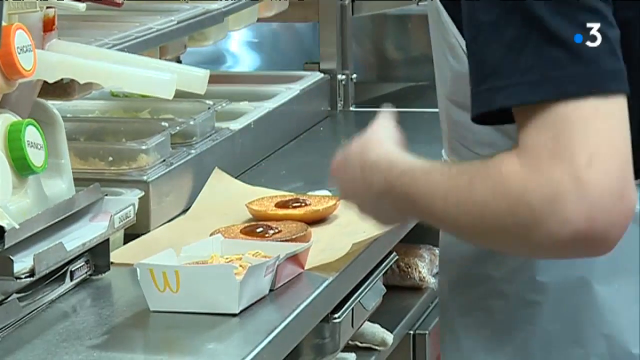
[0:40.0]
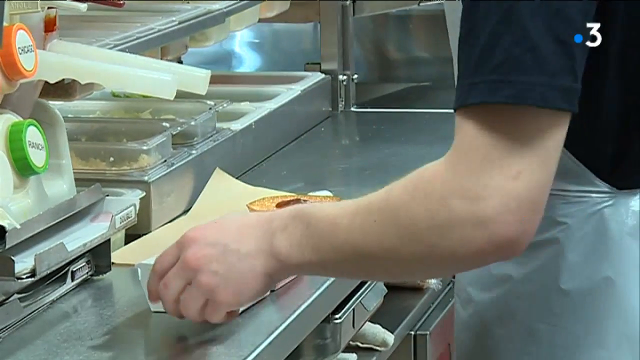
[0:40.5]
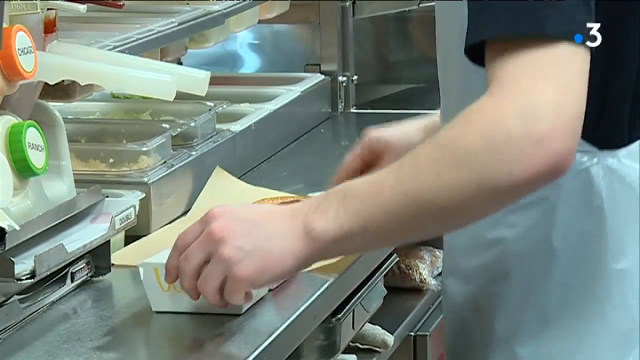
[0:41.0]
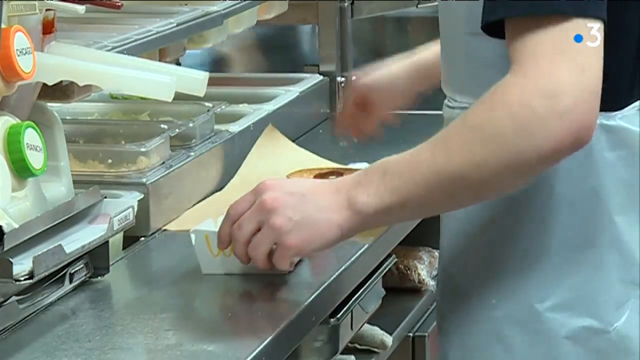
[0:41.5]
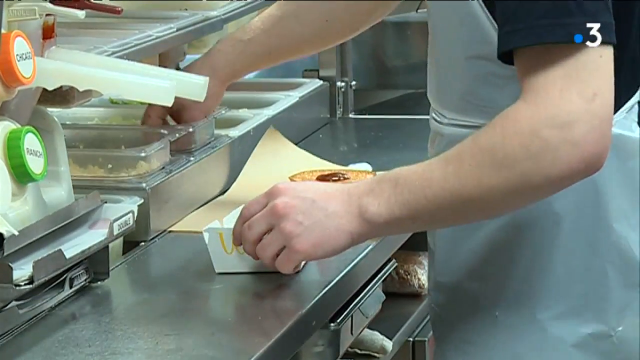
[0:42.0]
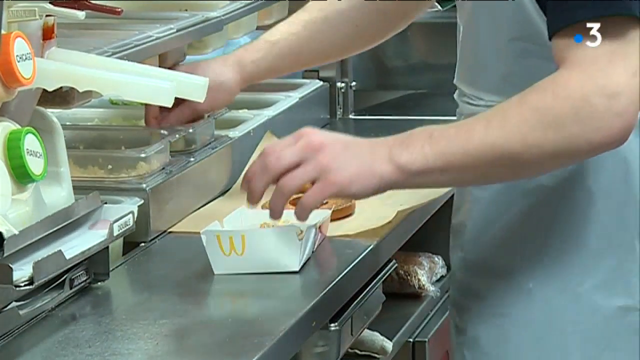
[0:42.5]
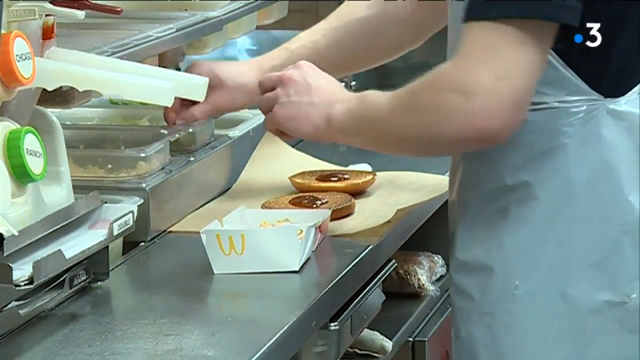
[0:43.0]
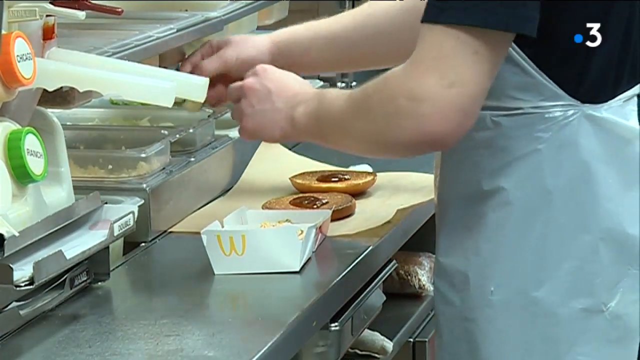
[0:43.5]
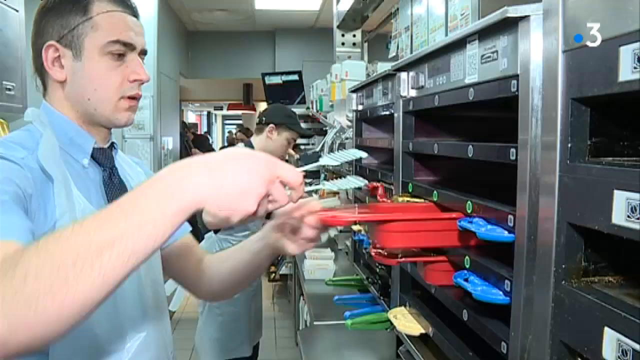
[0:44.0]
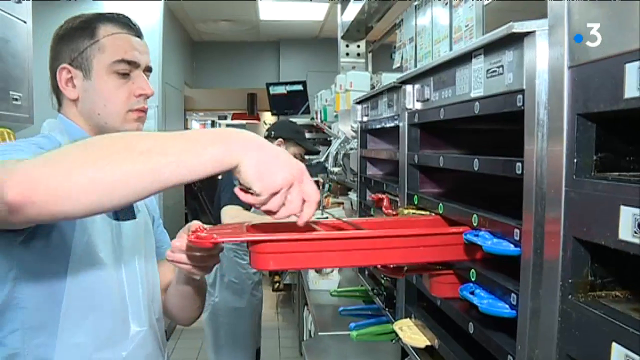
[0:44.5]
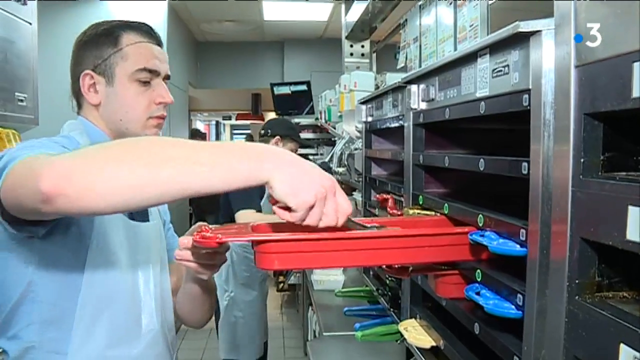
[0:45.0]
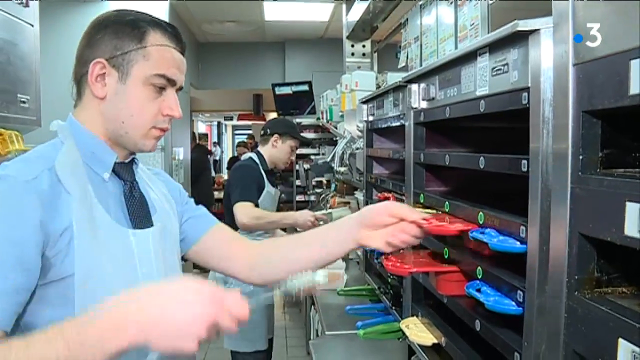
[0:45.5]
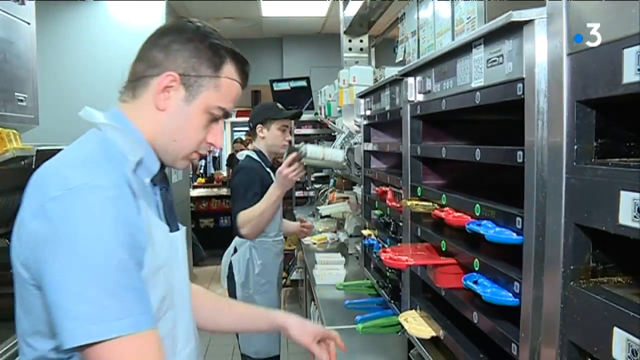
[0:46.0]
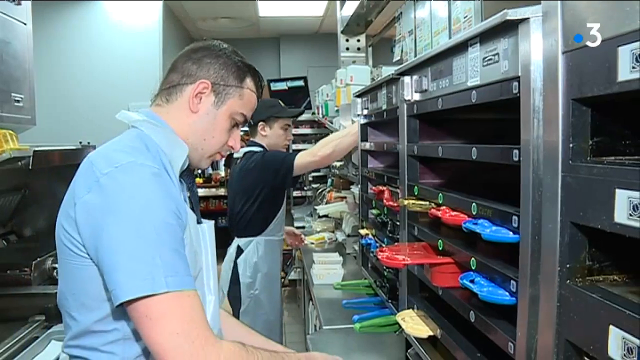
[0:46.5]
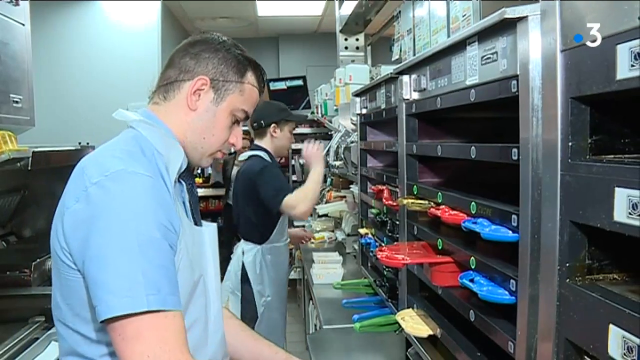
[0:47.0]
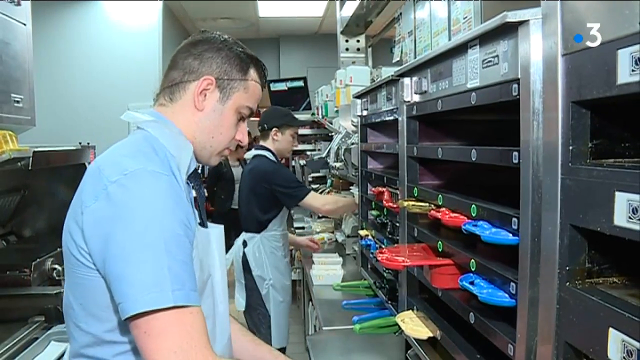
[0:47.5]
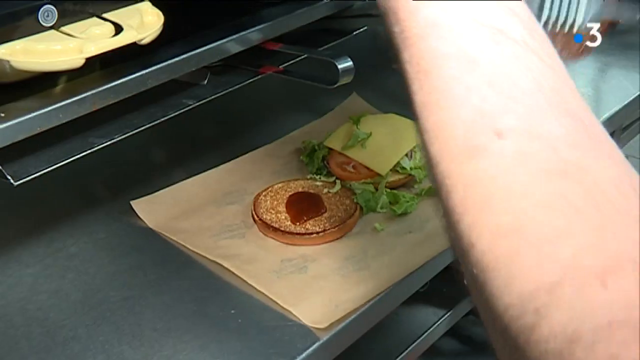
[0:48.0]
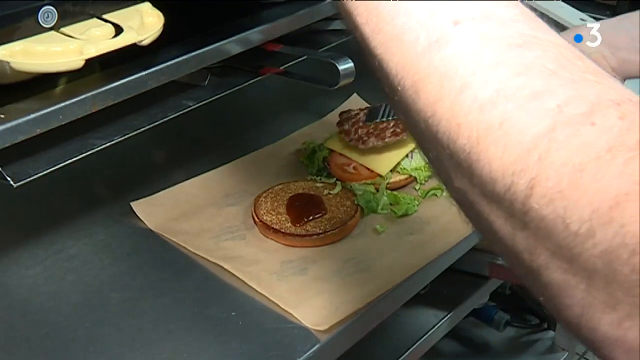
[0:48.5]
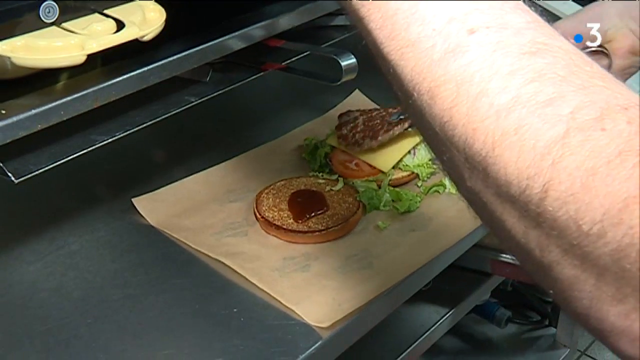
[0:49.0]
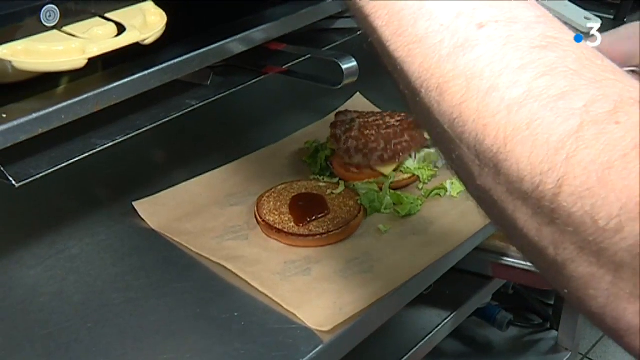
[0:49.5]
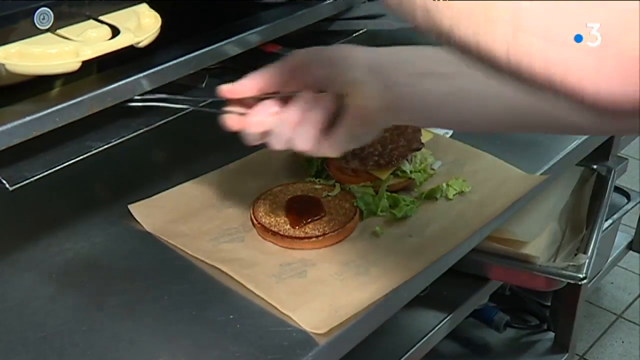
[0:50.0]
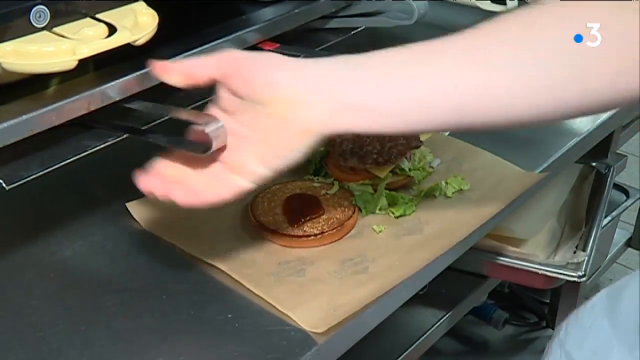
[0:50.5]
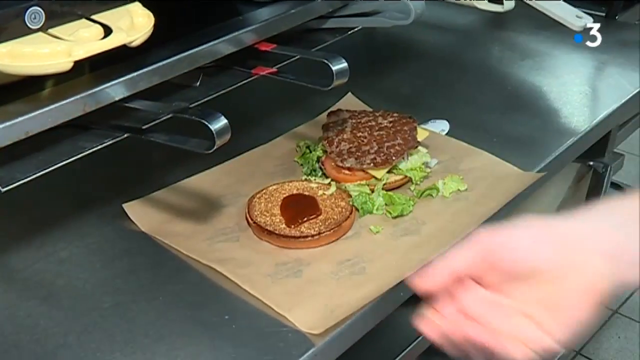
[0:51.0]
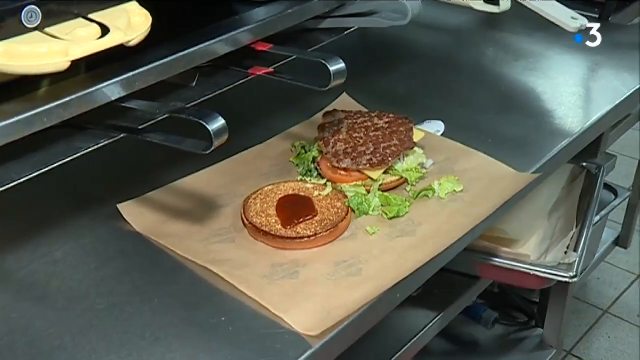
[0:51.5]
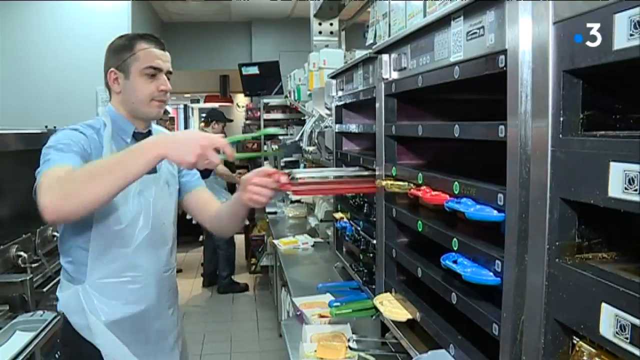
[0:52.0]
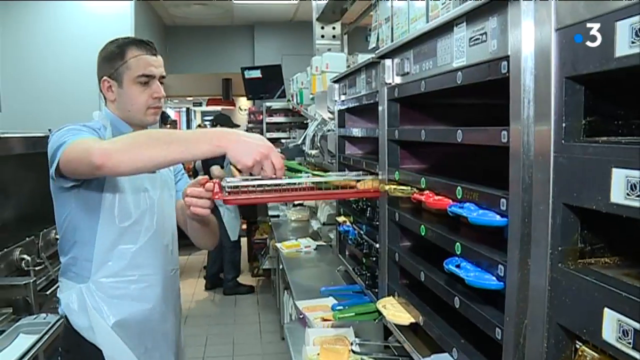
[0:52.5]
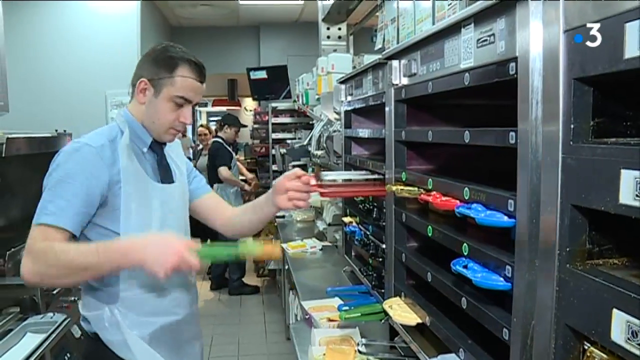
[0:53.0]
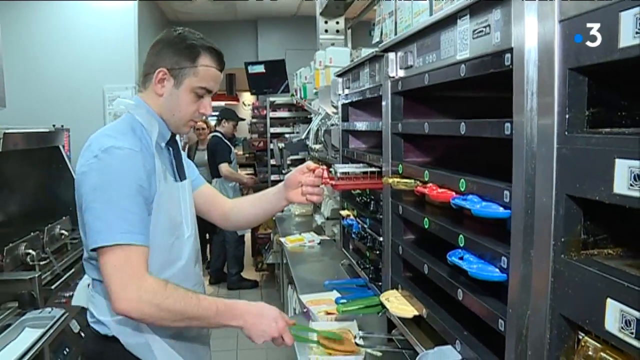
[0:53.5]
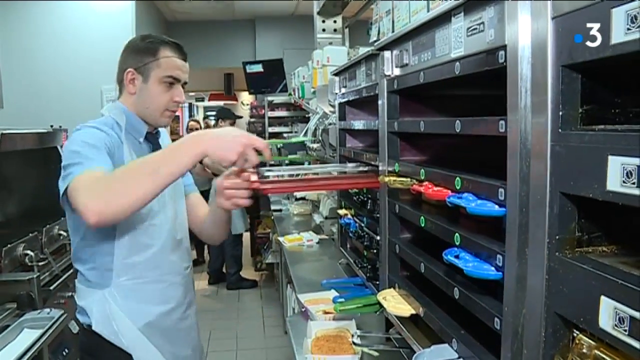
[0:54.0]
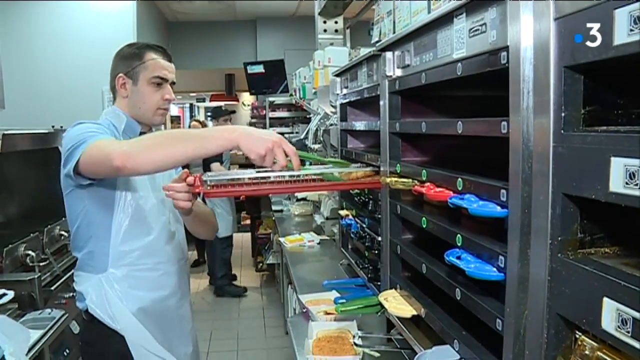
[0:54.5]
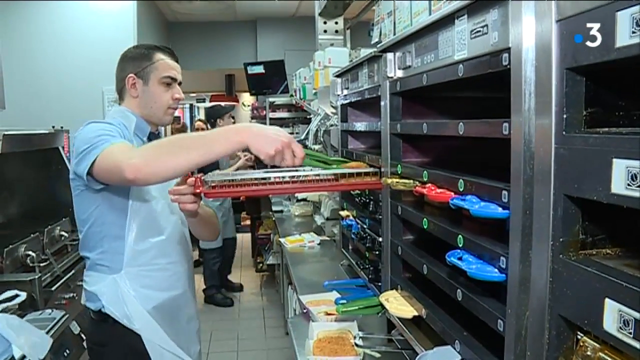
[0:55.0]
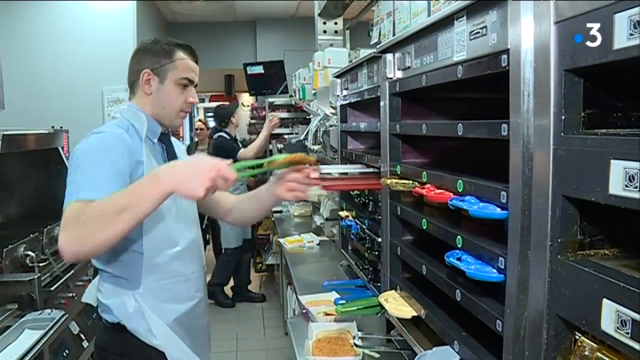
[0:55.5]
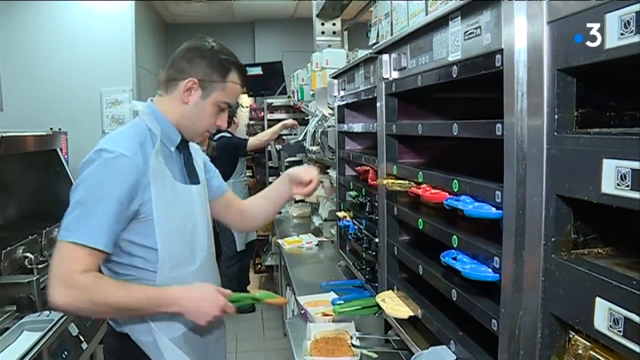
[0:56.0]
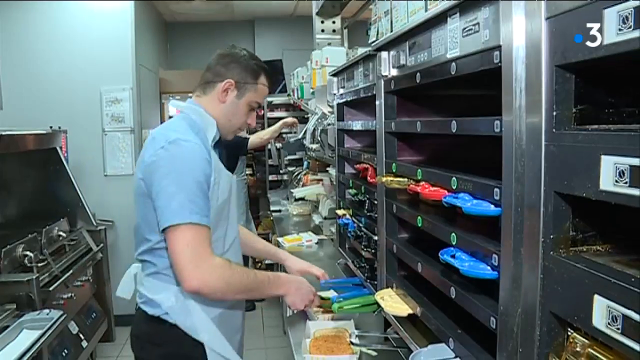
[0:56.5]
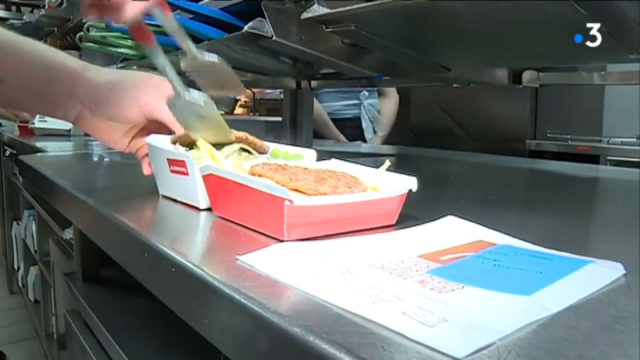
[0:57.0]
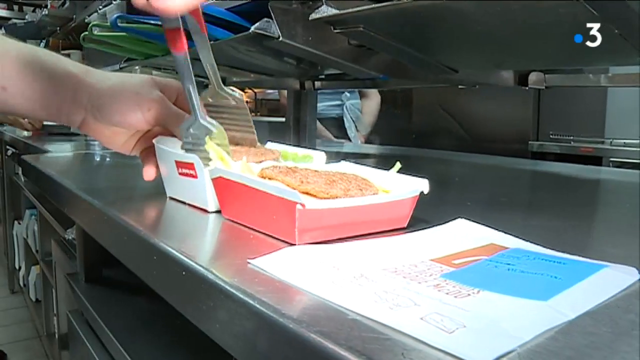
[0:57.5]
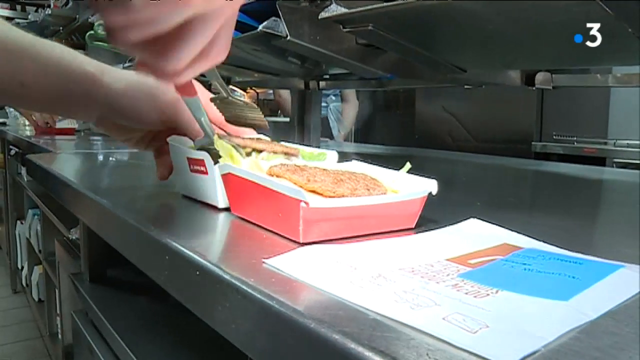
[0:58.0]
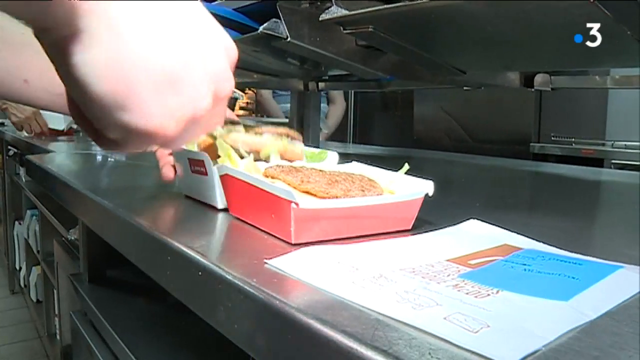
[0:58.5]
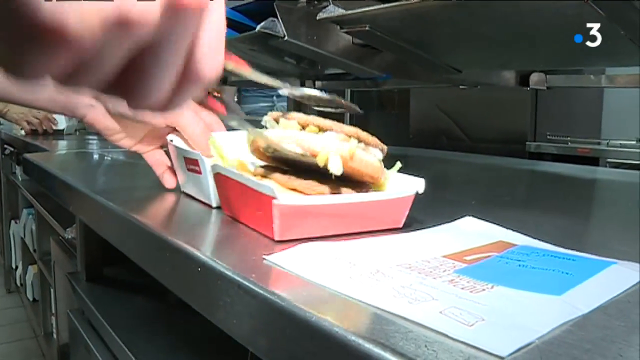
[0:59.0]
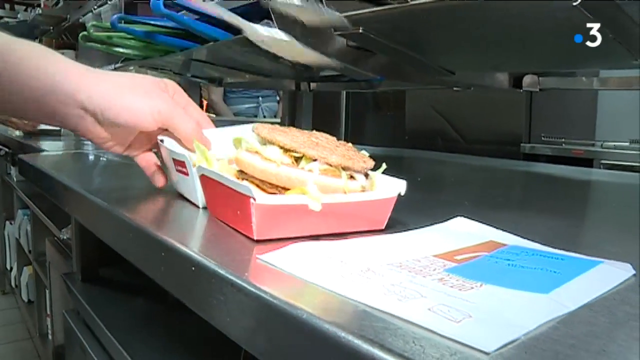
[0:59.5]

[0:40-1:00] Someone prepares a McDonald's burger with an open McDonald's carton in front of them on a metal kitchen countertop. A bun is on a piece of paper, and they reach into cartons for other items to put on it. The shot switches to another person reaching into a slide-out tray and grabbing some material, presumably to make food; he is a man in a short-sleeved blue shirt and a hairnet. Back at the counter, a close-up shows someone placing a patty on top of a slice of cheese, which rests on a stack of lettuce and tomato slices, while the other bun has a squirt of ketchup. The video returns to the man, who pulls more items out of the tray with a pair of tongs; he wears a white apron over his short-sleeved blue shirt.